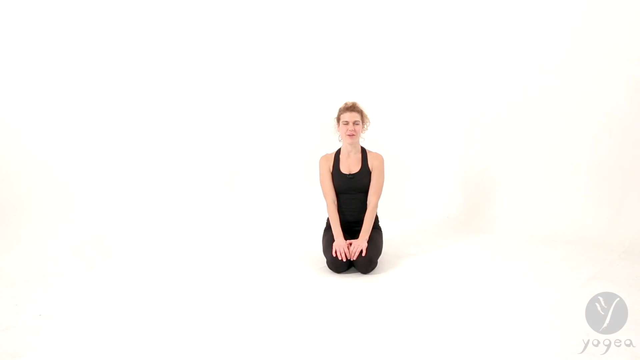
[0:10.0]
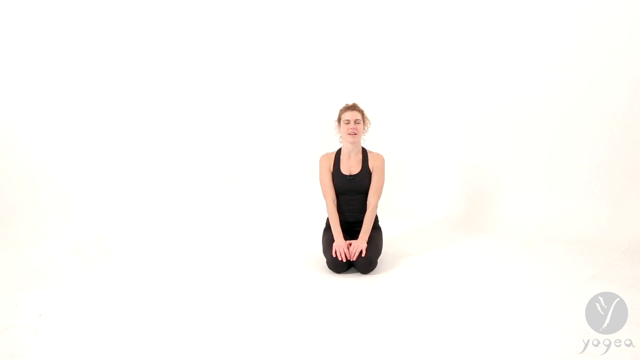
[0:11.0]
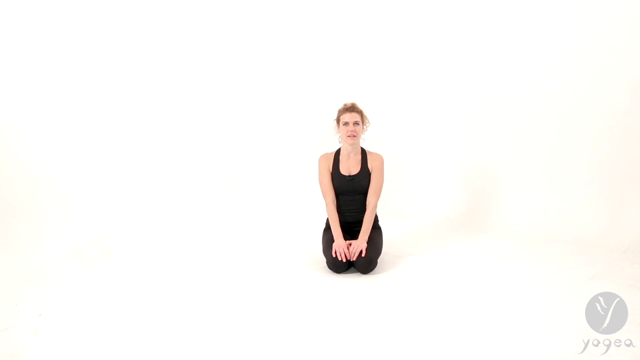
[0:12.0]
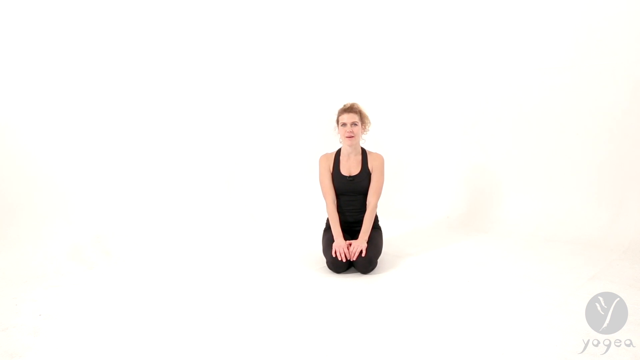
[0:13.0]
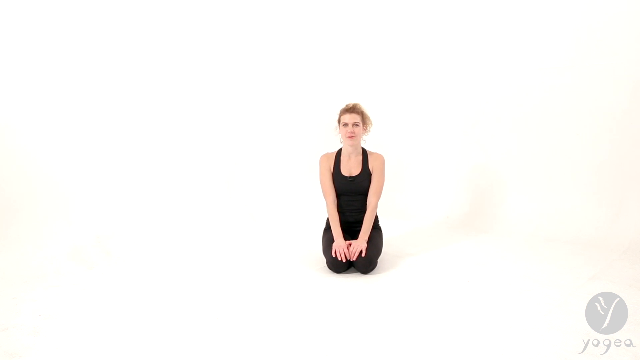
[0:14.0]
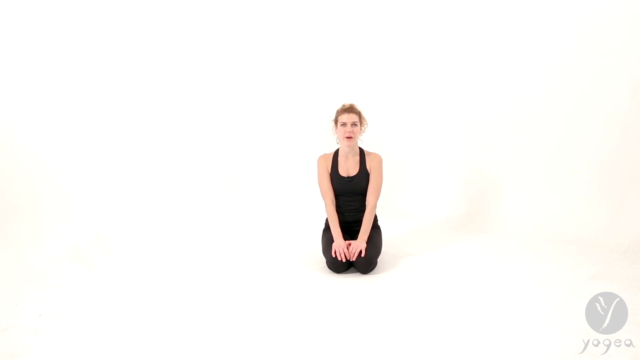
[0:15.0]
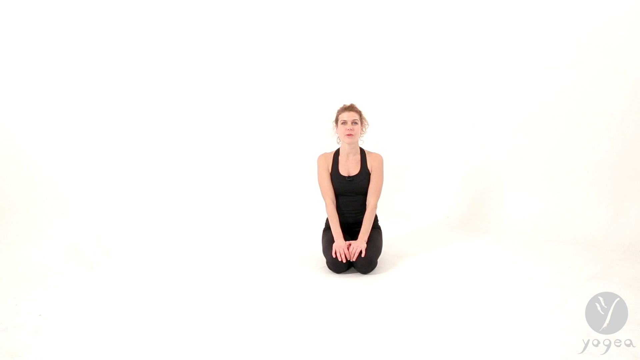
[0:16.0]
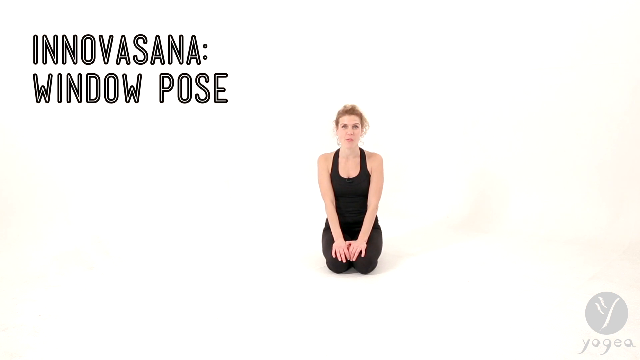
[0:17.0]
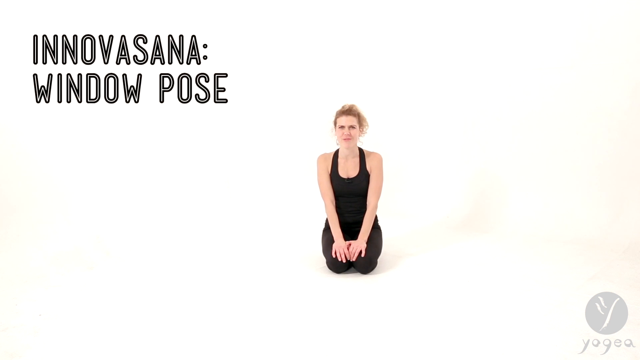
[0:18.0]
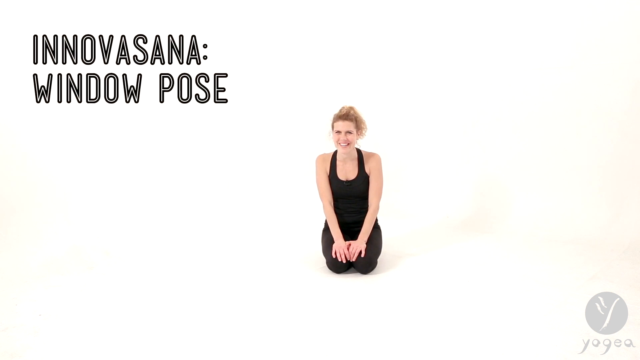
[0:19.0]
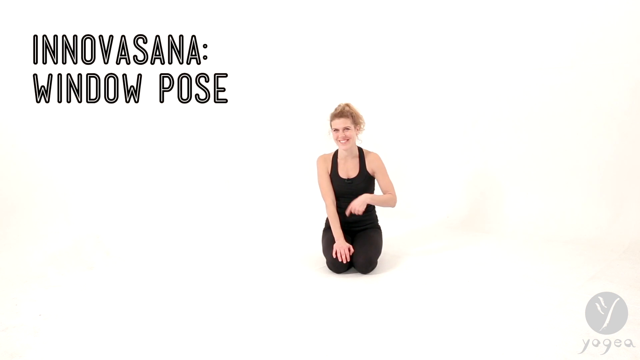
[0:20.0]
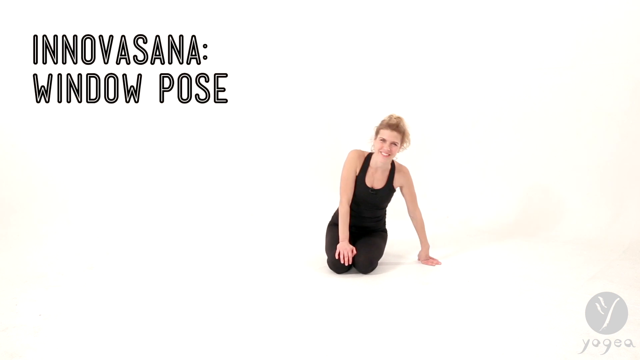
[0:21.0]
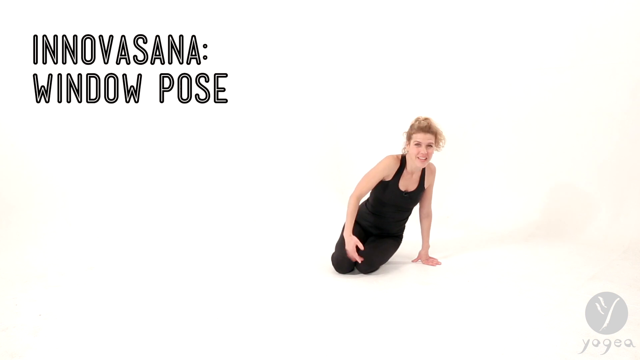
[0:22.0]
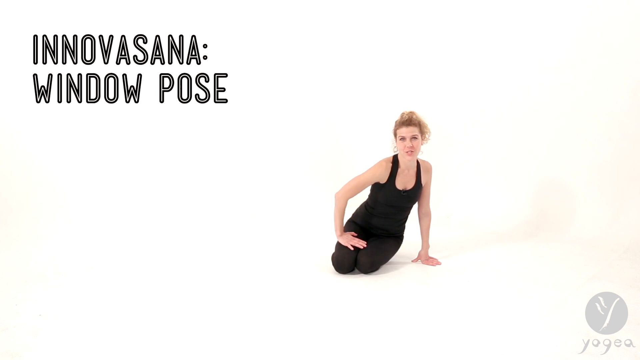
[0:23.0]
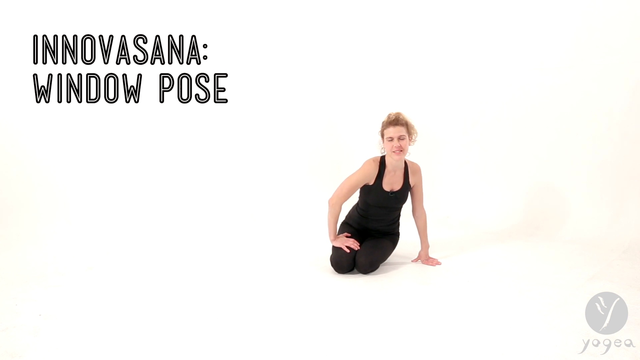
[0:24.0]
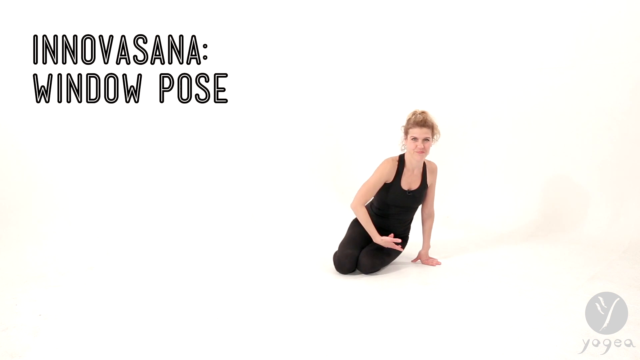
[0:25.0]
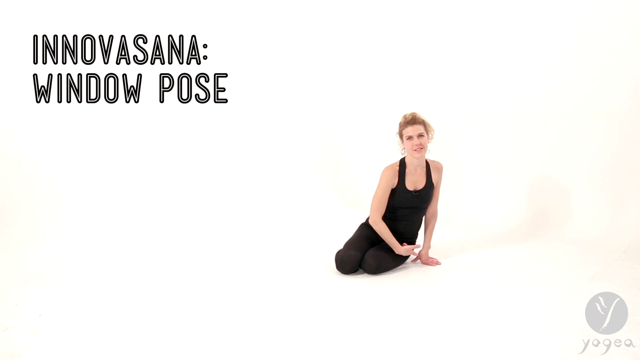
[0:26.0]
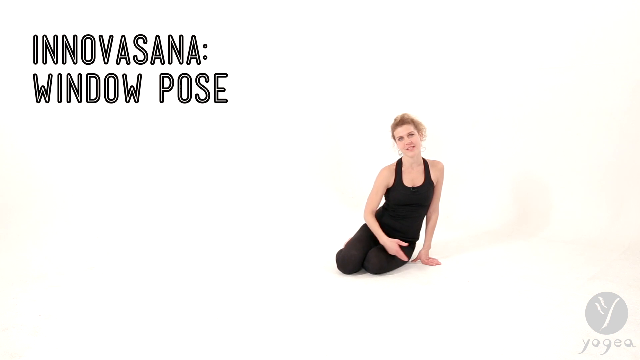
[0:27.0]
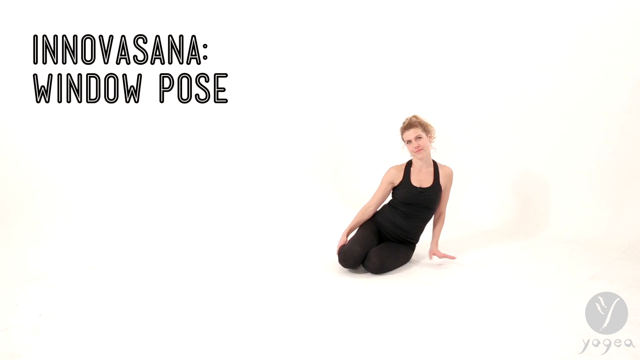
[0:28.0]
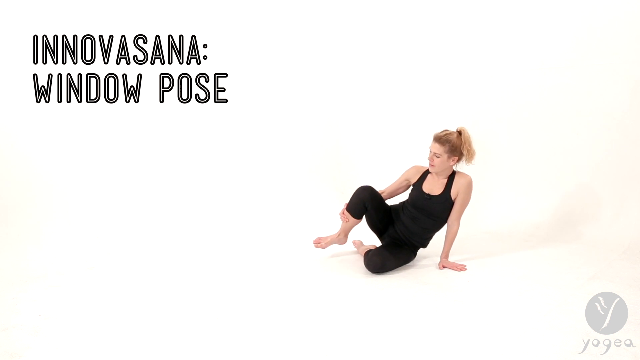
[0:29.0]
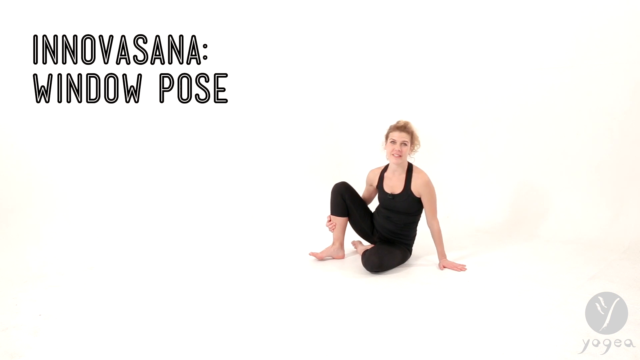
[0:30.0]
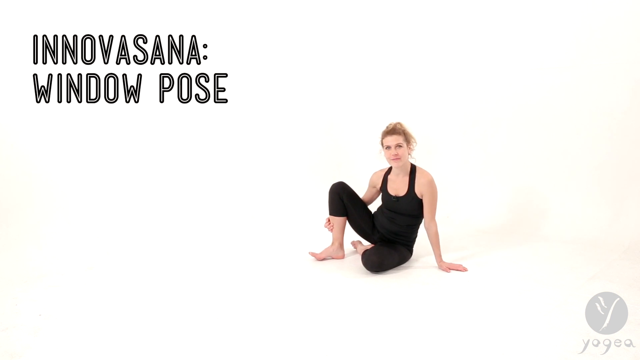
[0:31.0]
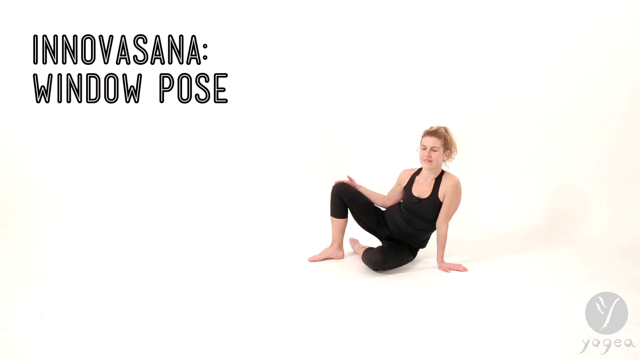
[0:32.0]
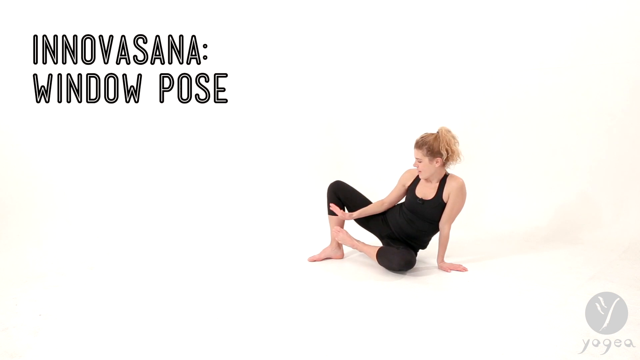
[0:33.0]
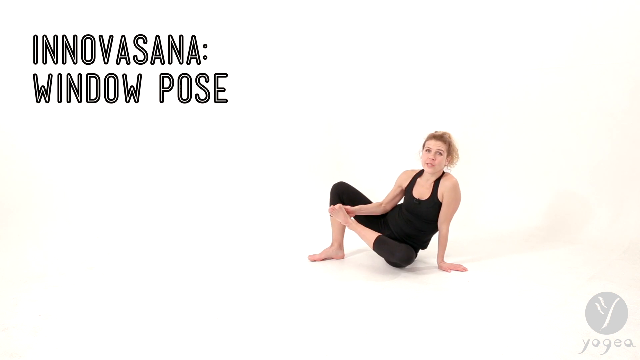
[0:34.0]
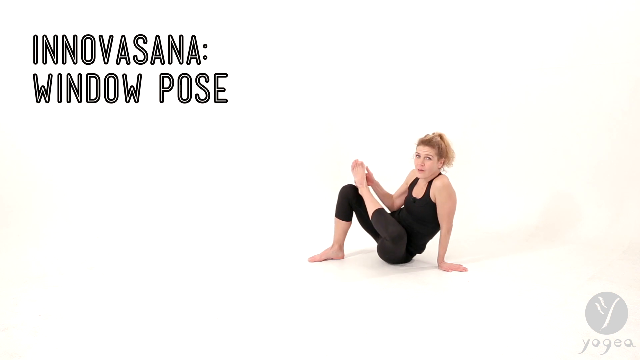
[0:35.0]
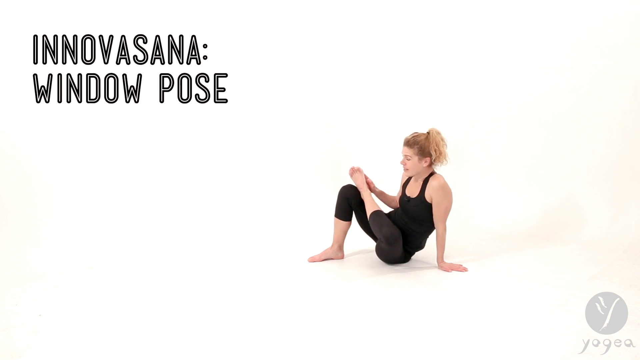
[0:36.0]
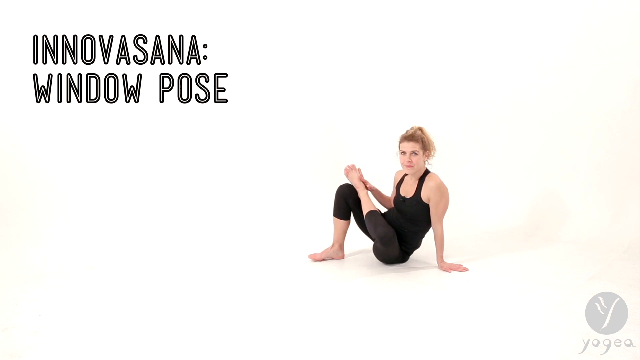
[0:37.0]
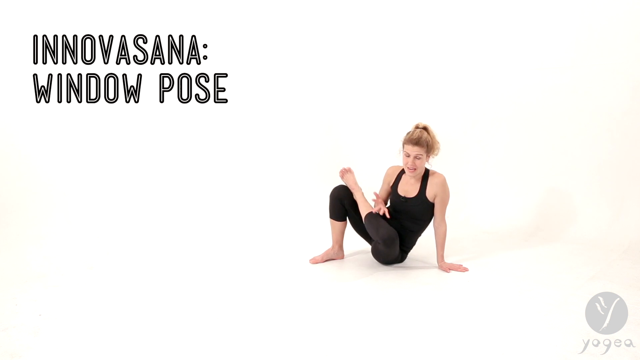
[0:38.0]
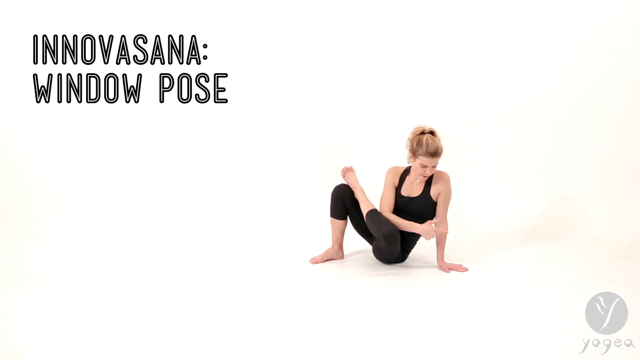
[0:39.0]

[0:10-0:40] The woman is on her knees, dressed in a black halter-neck top leotard, with both hands resting on her knees. Her eyes seem partially closed, and her blonde hair is pulled back behind her. She speaks, nodding her head as she talks and gently moving it a little from side to side. The background all around her is a pale off-white. Text pops up to her upper left reading "Innovasana: Window Pose". Her smile vanishes a bit as she adjusts position, leaning on her left hand with the palm placed flat on the floor while her other hand stays on one of her knees. She then leans into the left hand, adjusting her pose, sits on the floor with her right knee bent, and crosses her left foot over her right knee.